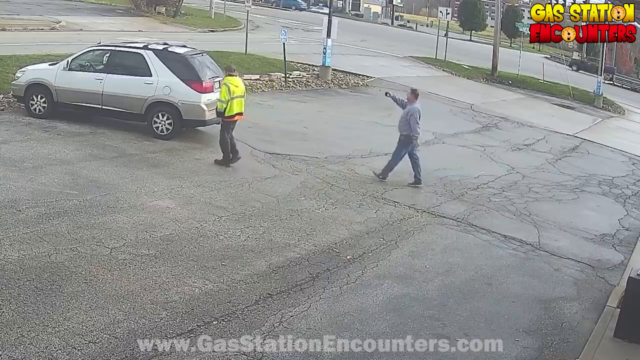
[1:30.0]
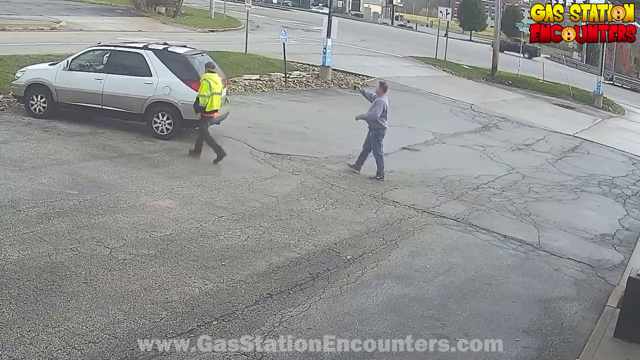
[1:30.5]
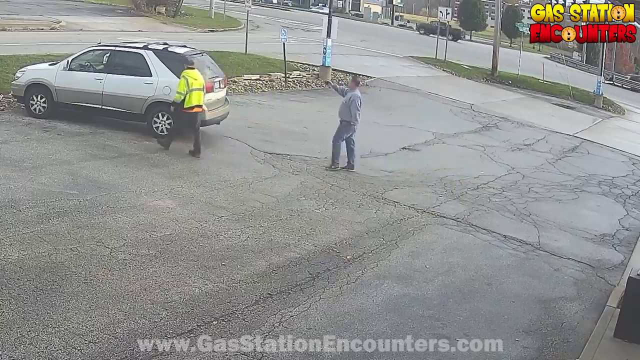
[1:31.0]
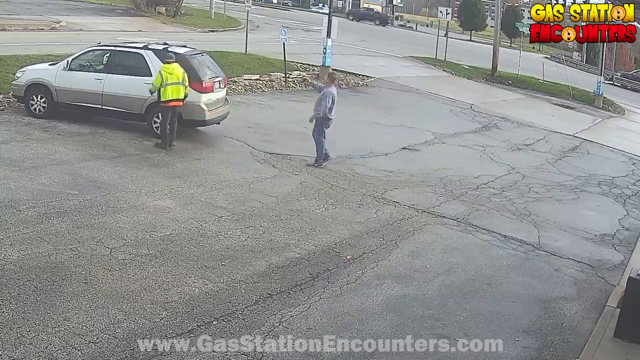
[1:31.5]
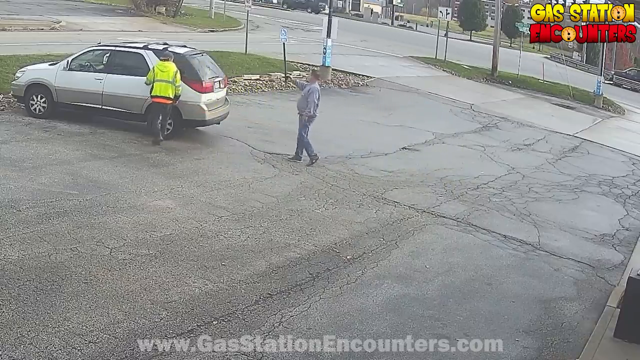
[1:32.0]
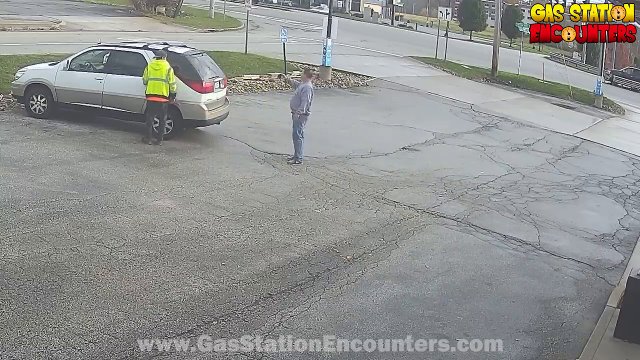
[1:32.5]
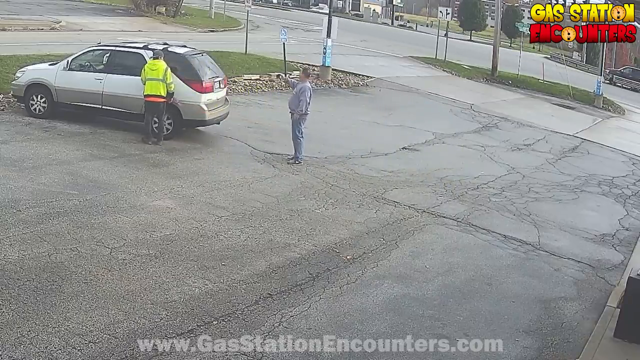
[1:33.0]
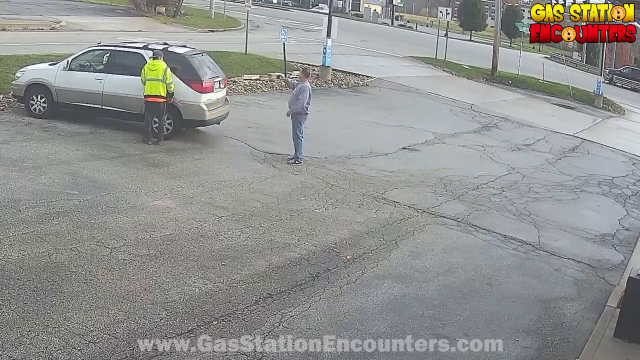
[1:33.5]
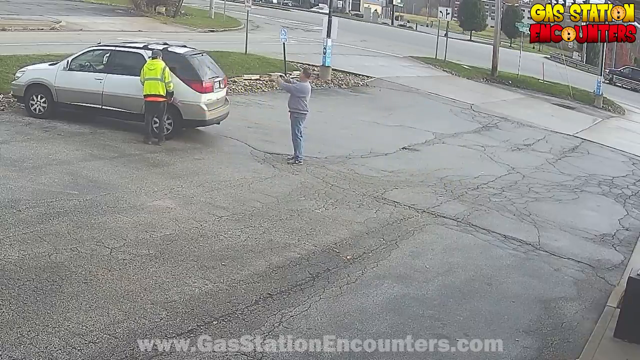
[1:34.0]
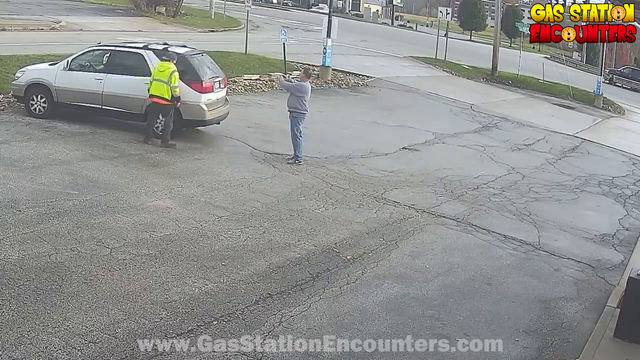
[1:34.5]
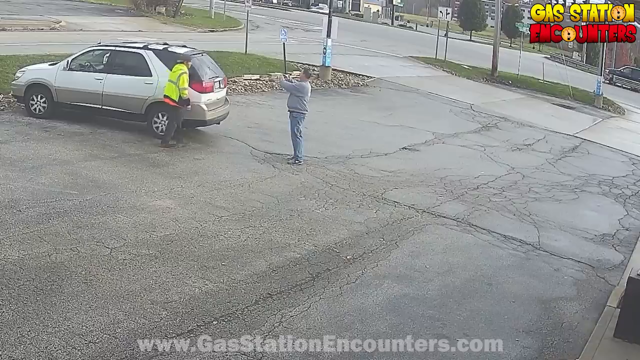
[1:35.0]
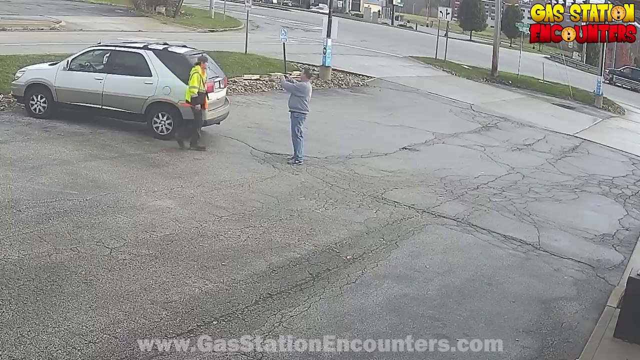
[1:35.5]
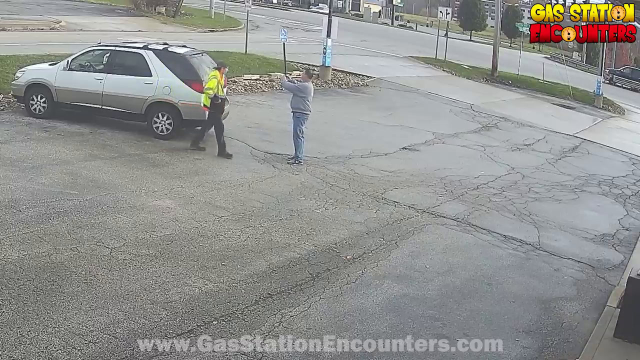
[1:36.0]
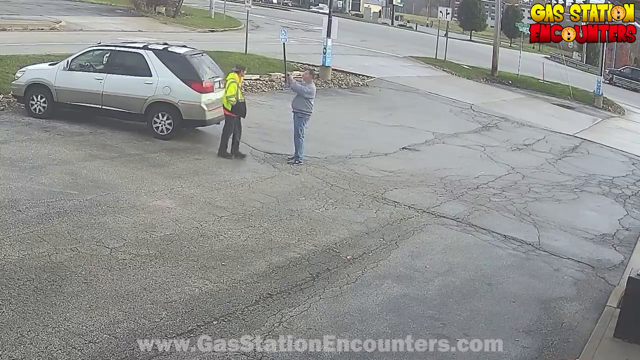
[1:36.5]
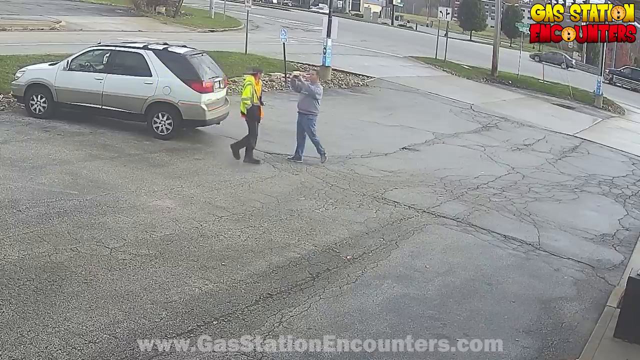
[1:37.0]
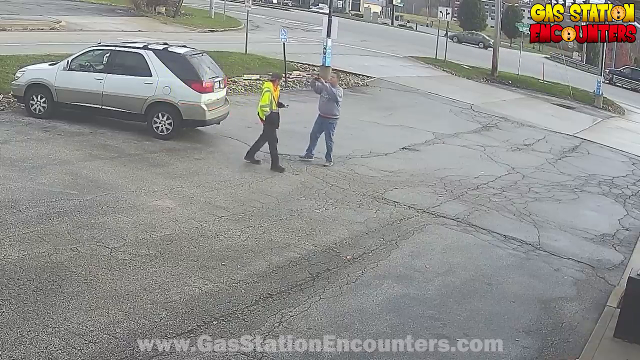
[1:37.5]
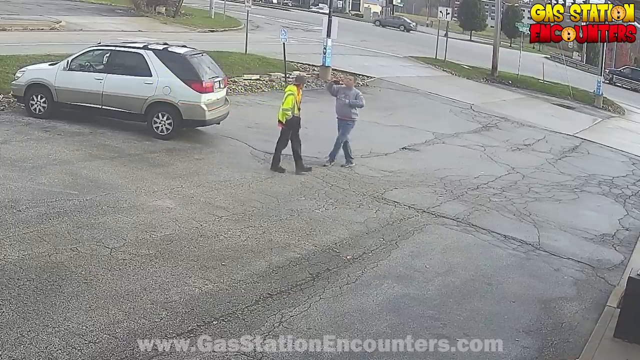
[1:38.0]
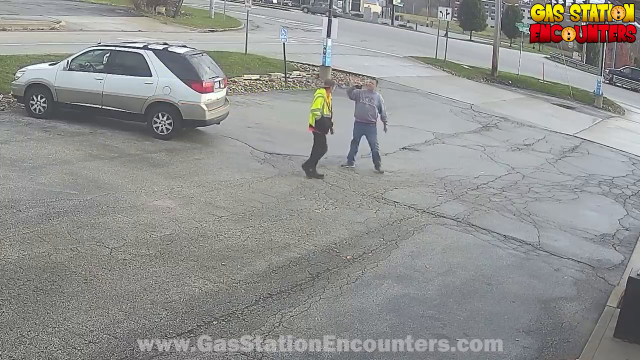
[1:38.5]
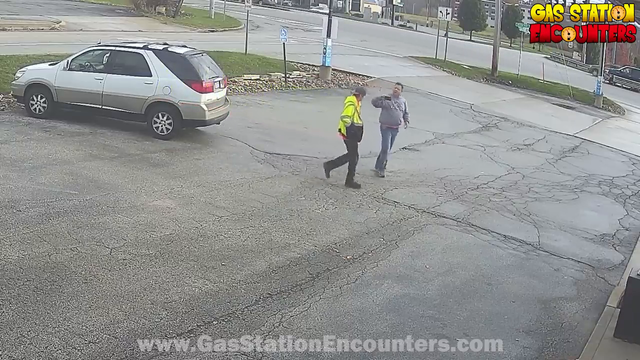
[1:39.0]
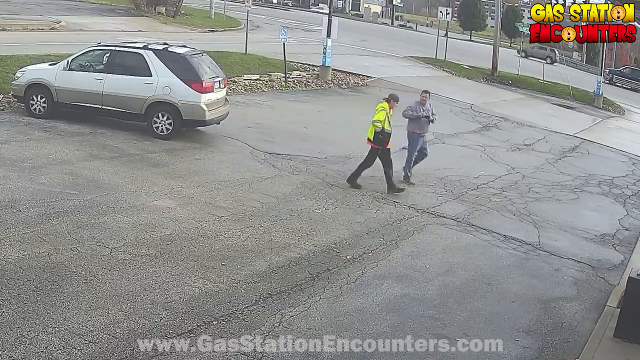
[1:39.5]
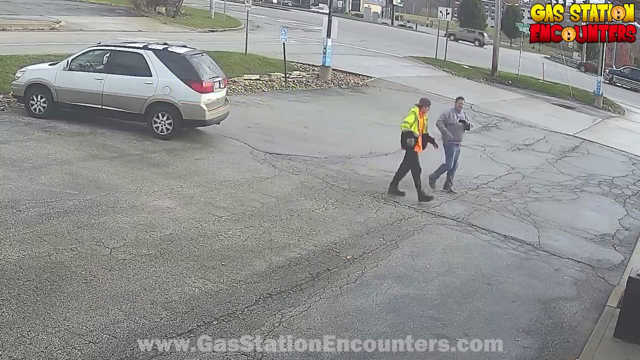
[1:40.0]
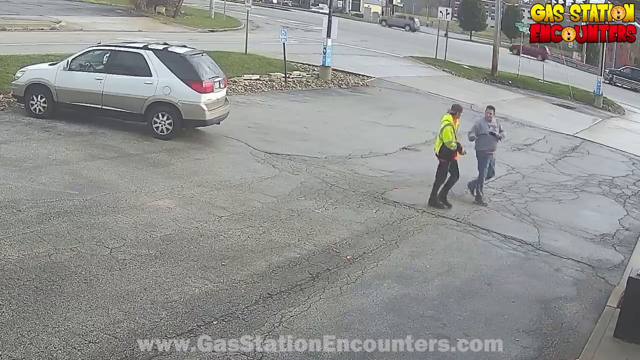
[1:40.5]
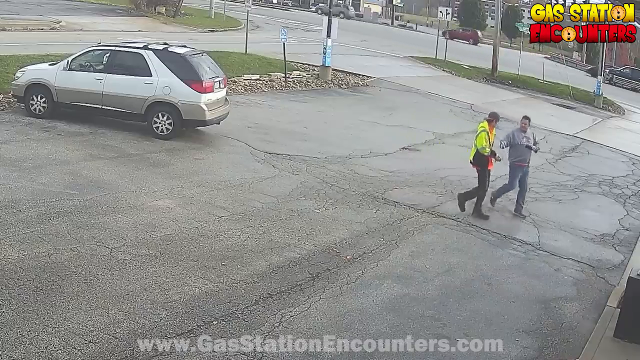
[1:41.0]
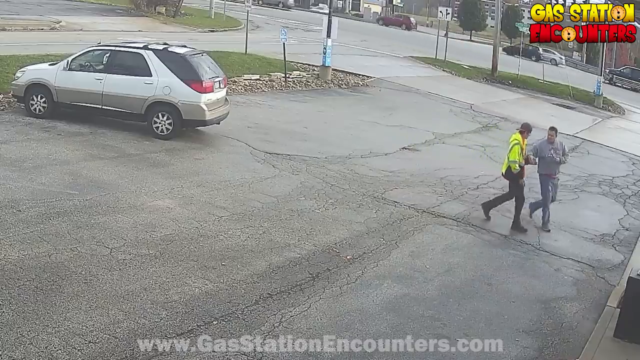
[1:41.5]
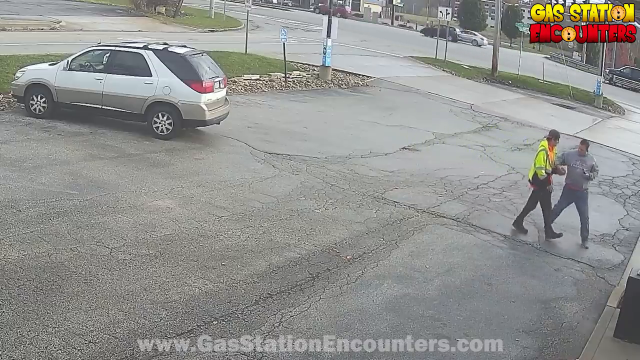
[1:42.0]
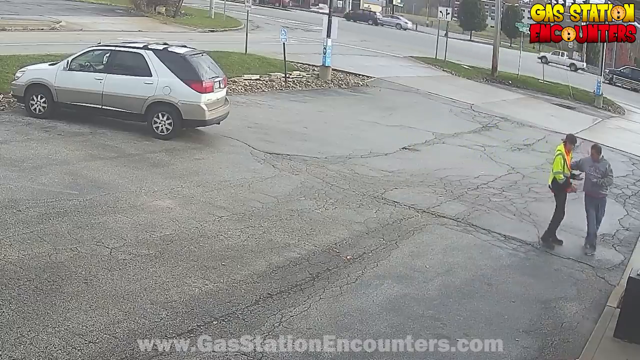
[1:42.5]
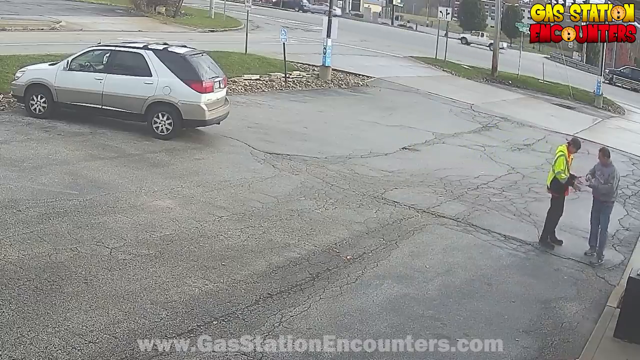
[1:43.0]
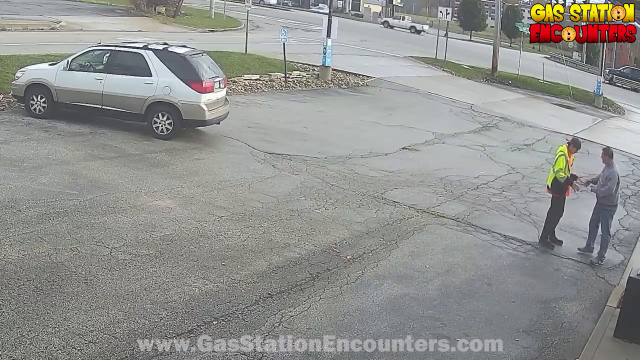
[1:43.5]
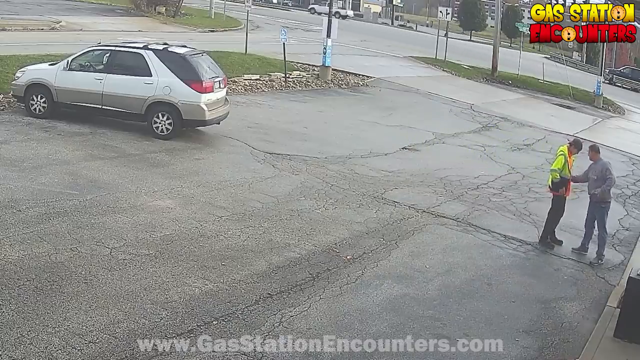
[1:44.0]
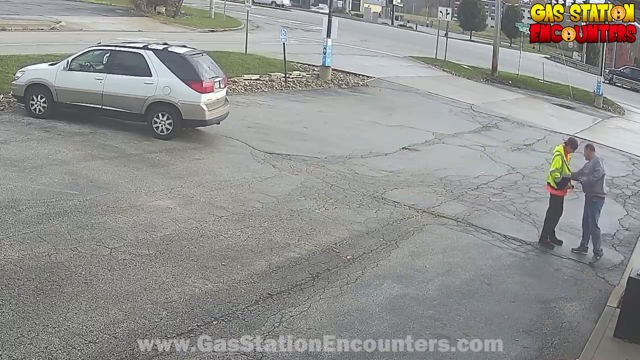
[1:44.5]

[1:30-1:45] The man in the yellow jacket stands to the side of the very back end of a vehicle. The man in the gray shirt is a few feet behind the vehicle and appears to be photographing it with what looks like a phone in his hand. The scene is a parking lot outside a gas station, mostly gray concrete, with two small patches of grass, one in front of the vehicle and one off to the right of the man. At the beginning, a black truck drives by far in the distance. The man in the yellow jacket turns his head to the right, sees the other man photographing his vehicle, and they confront each other, standing face to face. The man on the right, in a gray long-sleeve shirt, has a camera out and holds it with both hands. The man in the yellow jacket, on the left, has both hands in his pockets. Both men start to walk side by side, exchanging words. The man on the right in the gray shirt gives the man on the left something, and at the end they are facing each other.